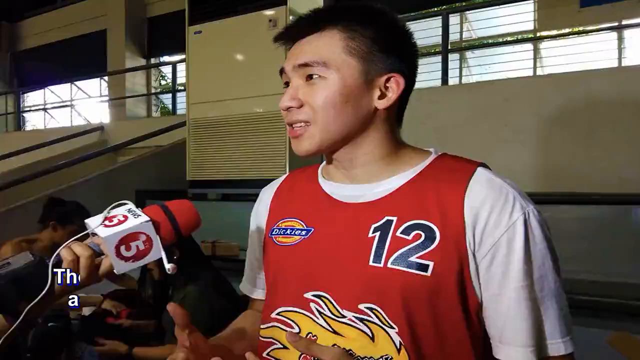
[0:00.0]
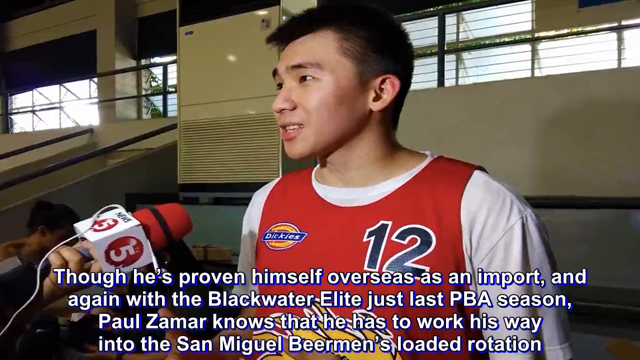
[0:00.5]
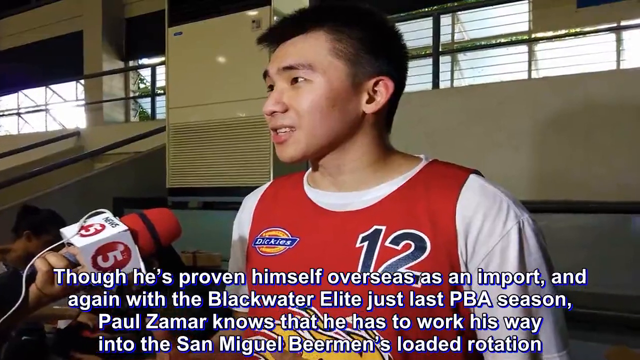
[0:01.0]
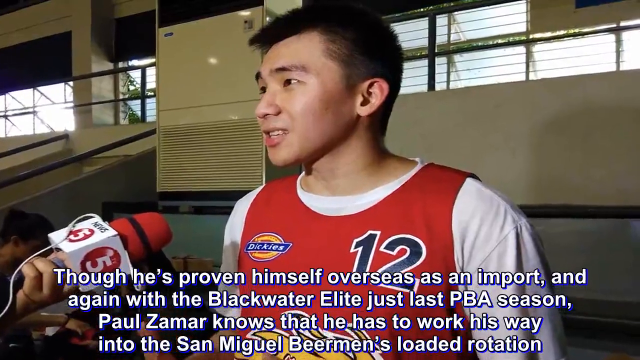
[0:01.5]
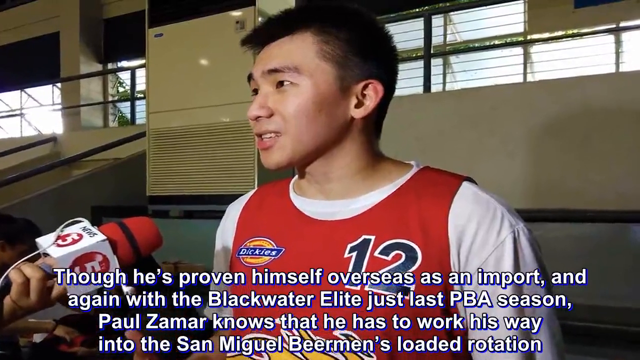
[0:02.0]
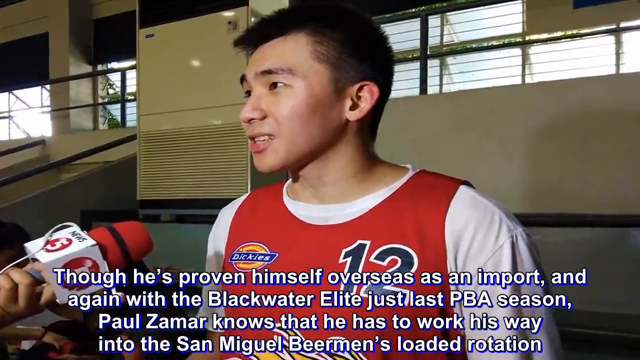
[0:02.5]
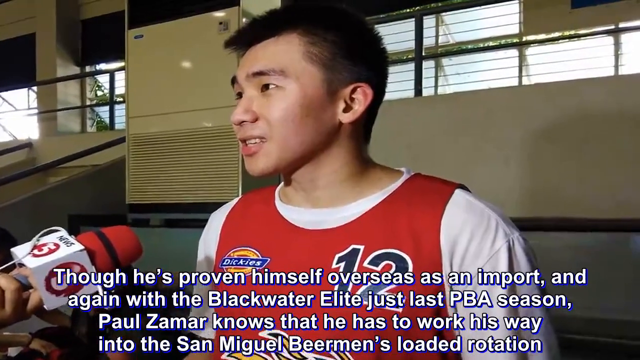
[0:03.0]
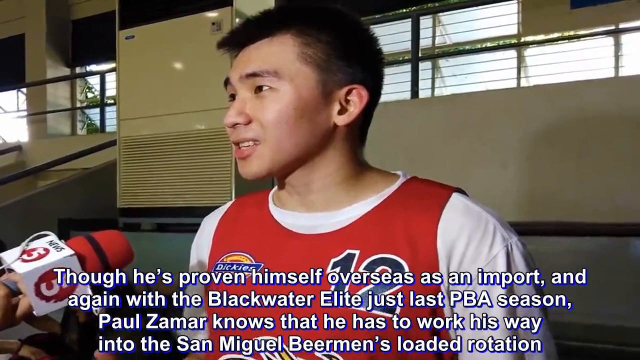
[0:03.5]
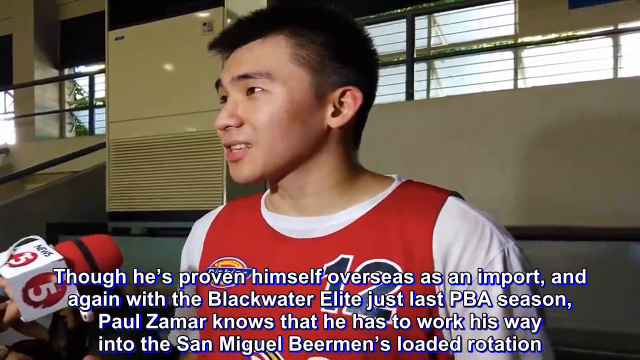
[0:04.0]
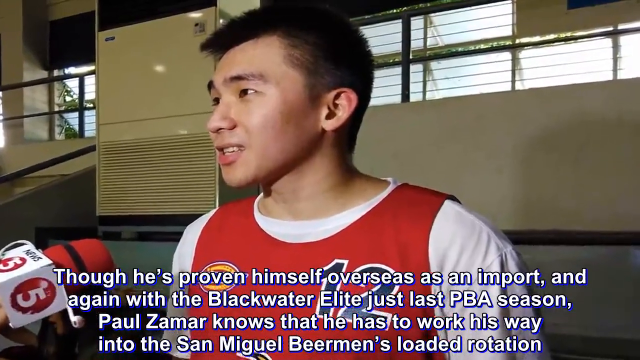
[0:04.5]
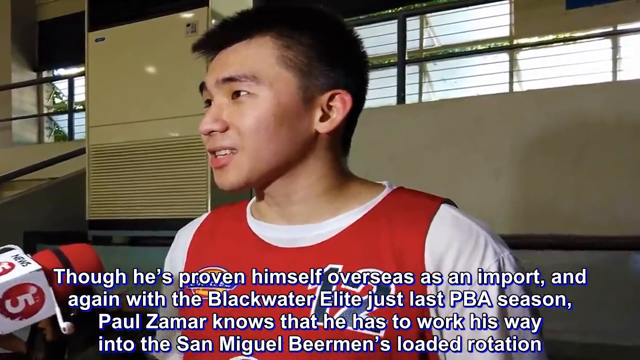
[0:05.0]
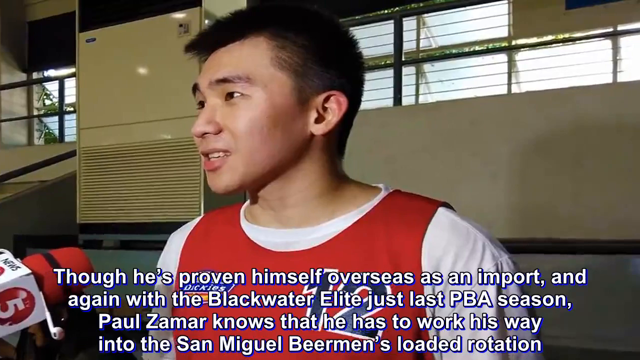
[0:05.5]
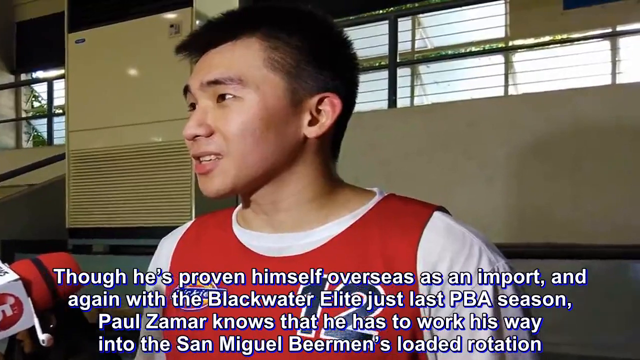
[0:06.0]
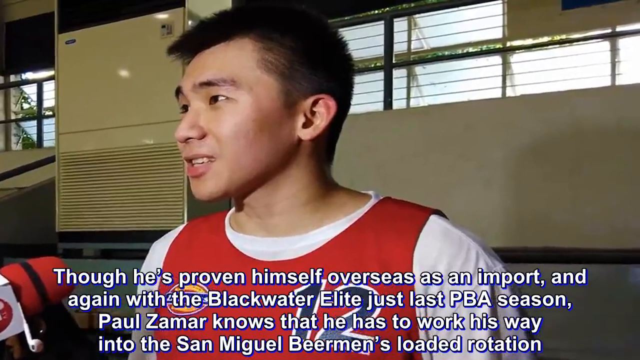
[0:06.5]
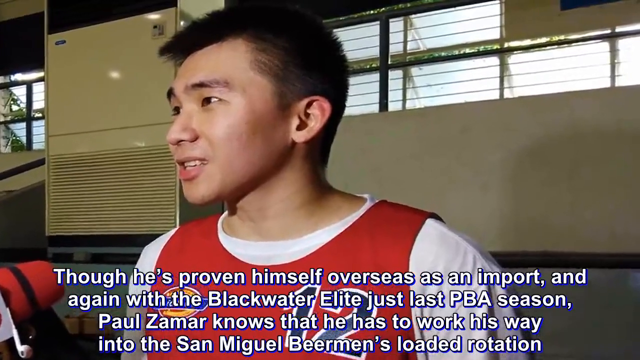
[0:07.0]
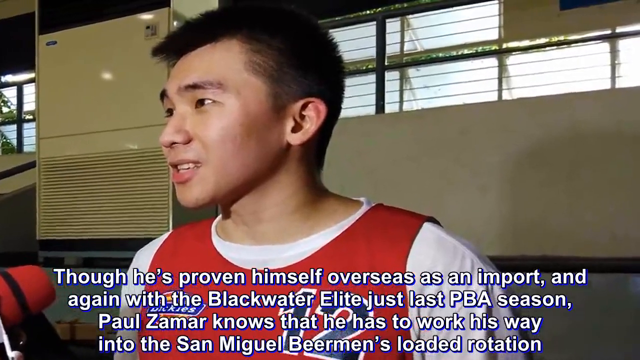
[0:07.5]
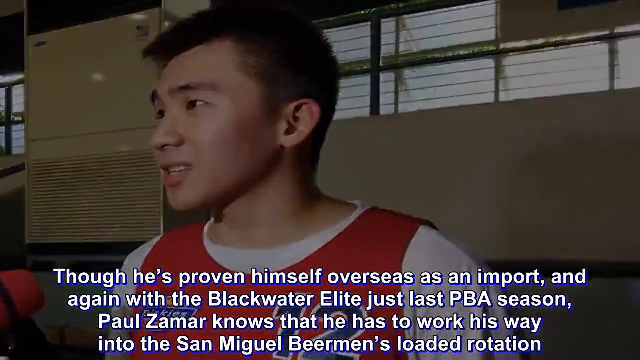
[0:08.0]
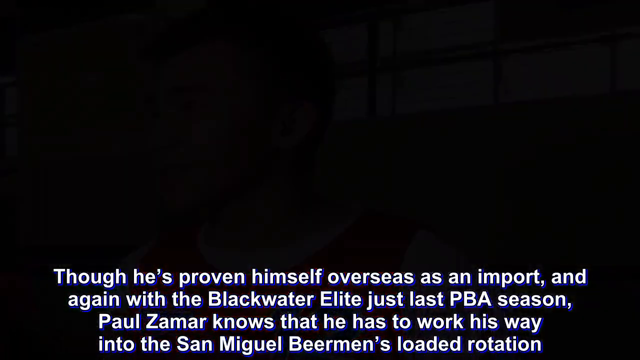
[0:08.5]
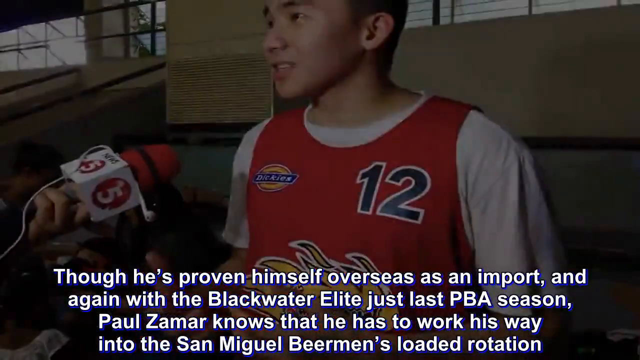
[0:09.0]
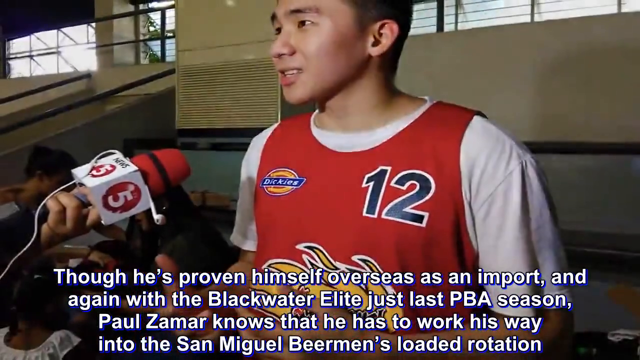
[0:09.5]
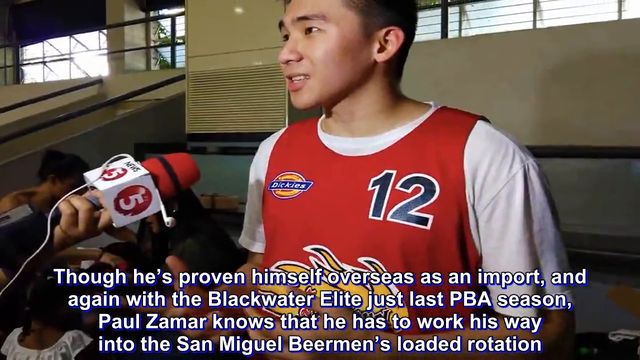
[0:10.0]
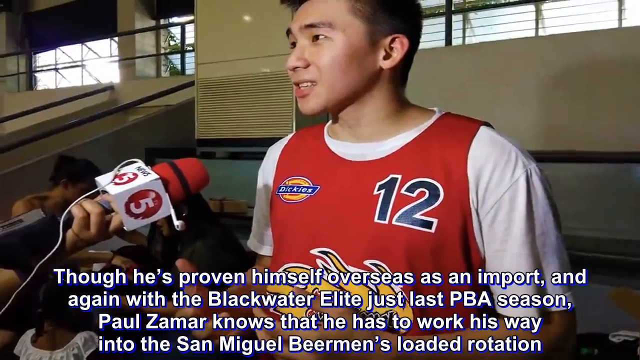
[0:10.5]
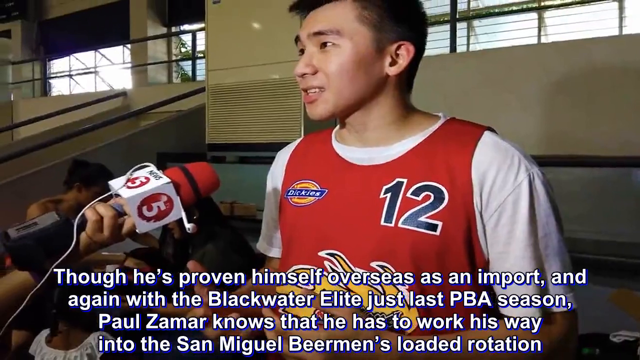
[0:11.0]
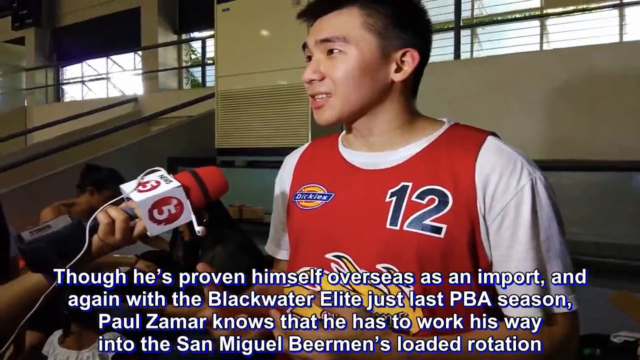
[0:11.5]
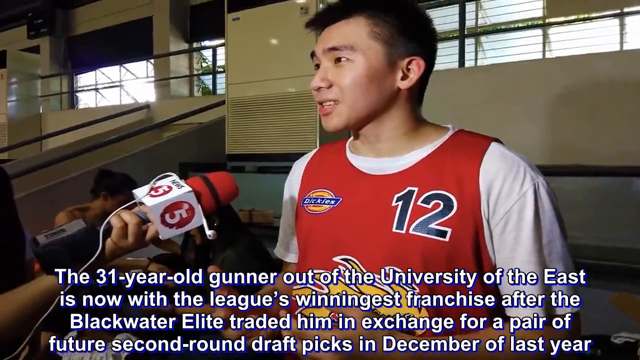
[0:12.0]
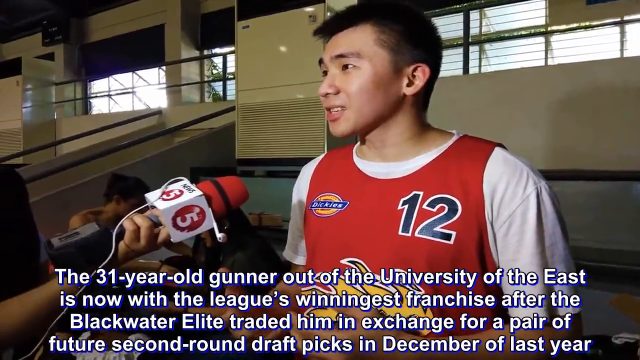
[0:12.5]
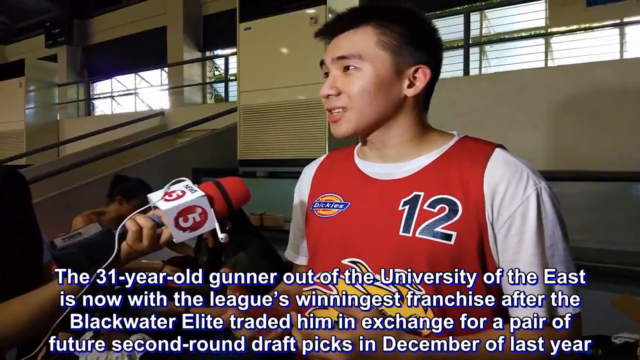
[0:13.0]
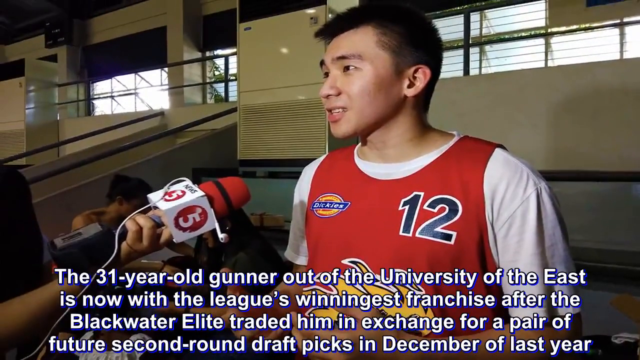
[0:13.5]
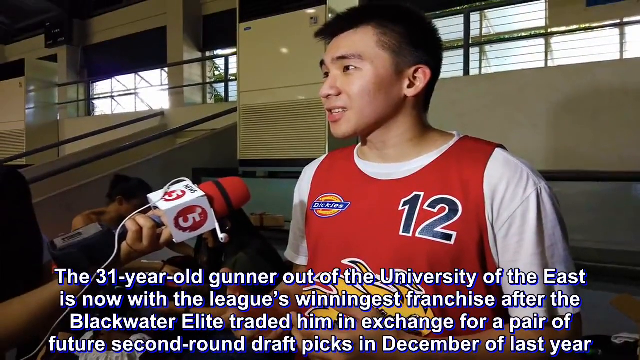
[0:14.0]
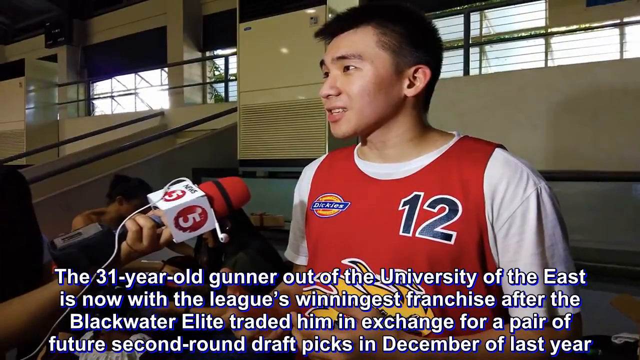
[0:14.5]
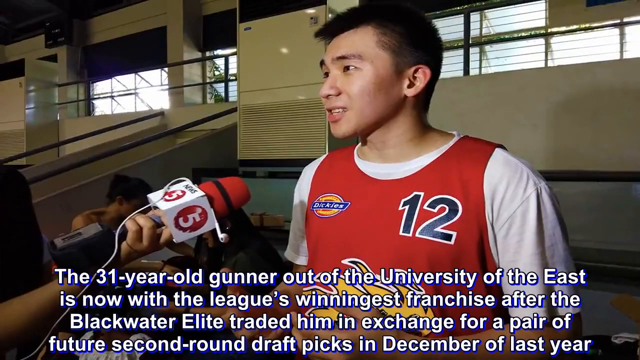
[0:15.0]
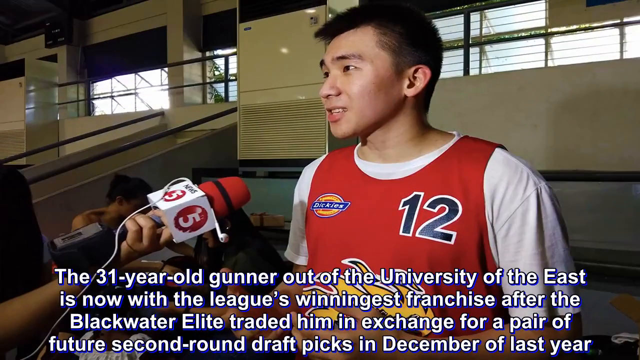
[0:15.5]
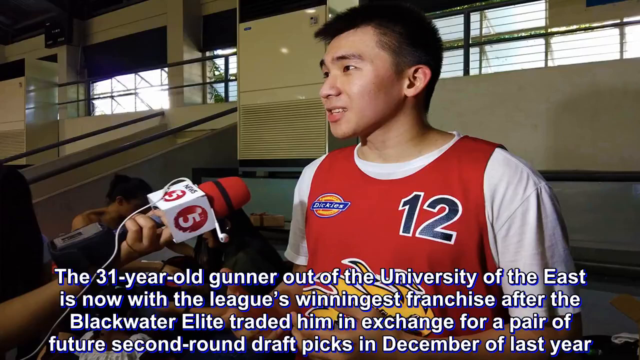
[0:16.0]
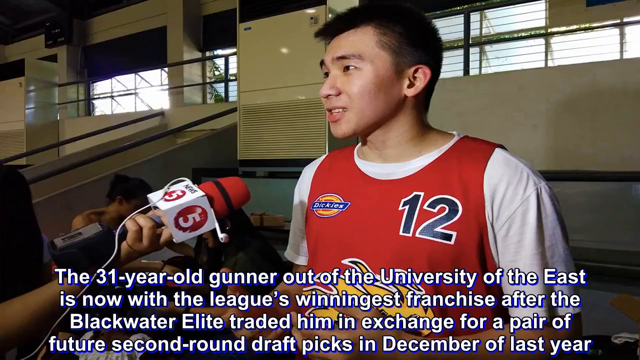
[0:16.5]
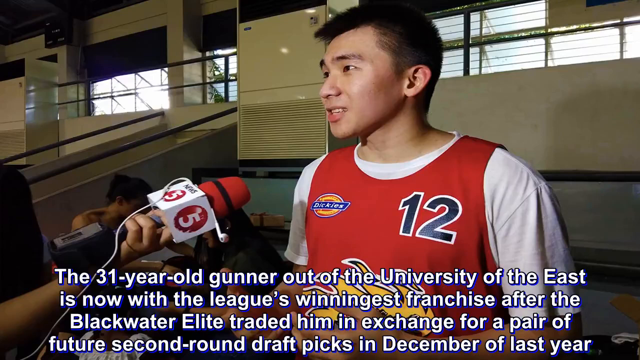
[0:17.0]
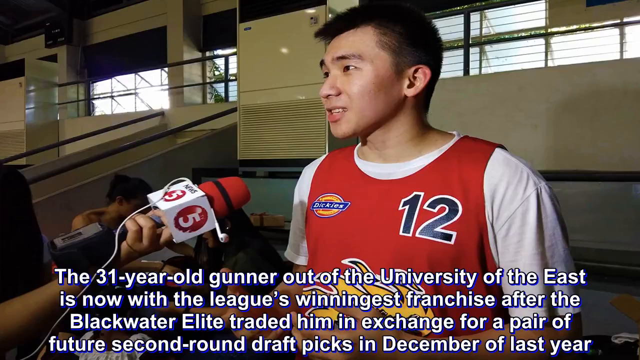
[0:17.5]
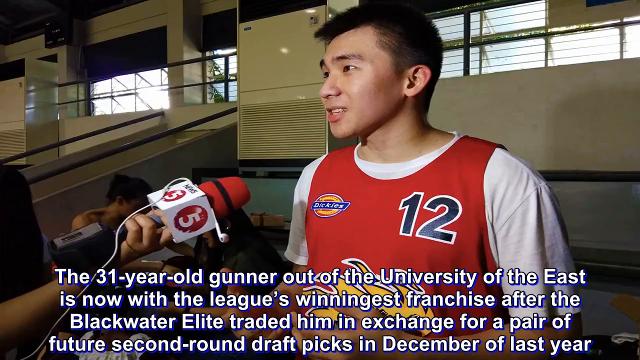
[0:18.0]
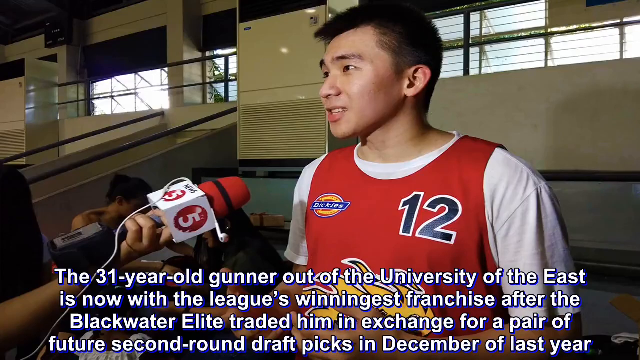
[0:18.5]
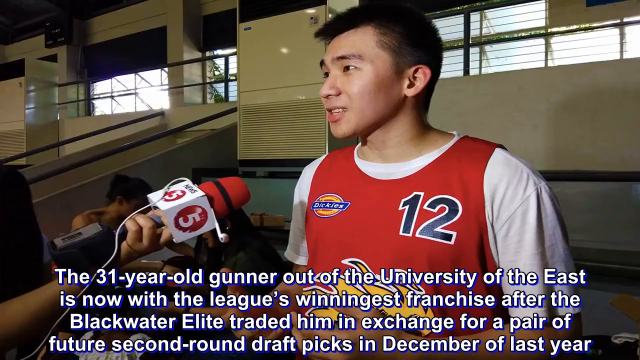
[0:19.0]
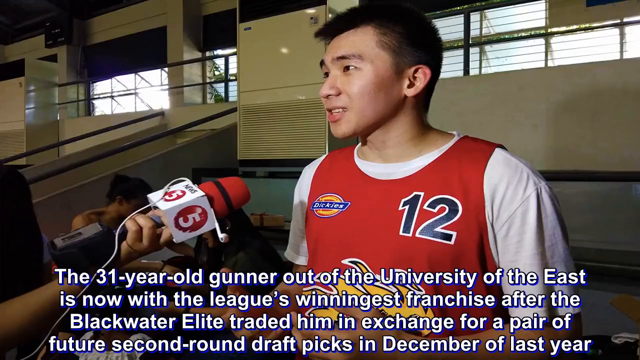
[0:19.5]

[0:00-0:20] A man stands on the right side of the frame. He is Asian and younger, looking to be in his 20s, with short black hair. He looks to the left, so the left side of his face is visible. He wears a white undershirt and a red jersey with the number 12 on the top left of the chest in black with a white border; at the top right of the chest is a sponsorship for Dickies. At the bottom left, a red microphone with the number five is held out toward the man. Two women sit in the background, also at the bottom left. The setting appears to be inside a sort of arena, with white walls and some sun shining in at the top left, indicating daytime. White text appears at the bottom middle of the video reading "though he's proven himself overseas as an import and again with Blackwater Elite just last BPA season Paul Zamar knows that he has to work his way into the San Miguel". The camera sort of zooms in on the man, then a brief flash occurs and the same image appears with the camera zooming outward, as the text at the bottom changes.